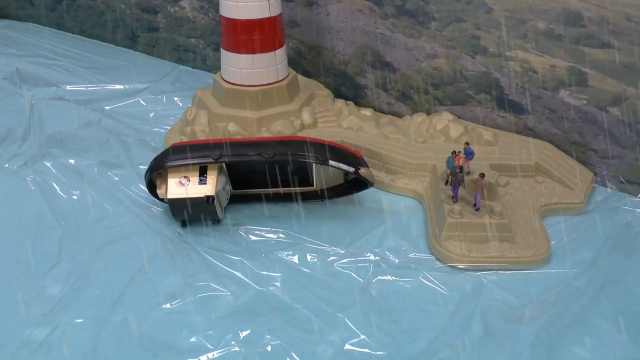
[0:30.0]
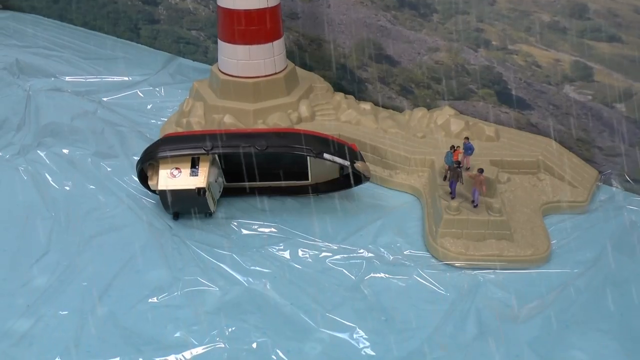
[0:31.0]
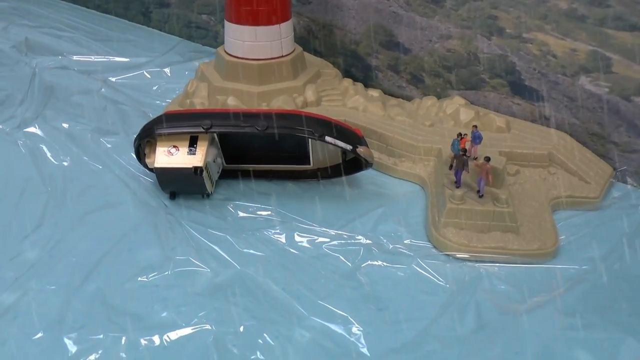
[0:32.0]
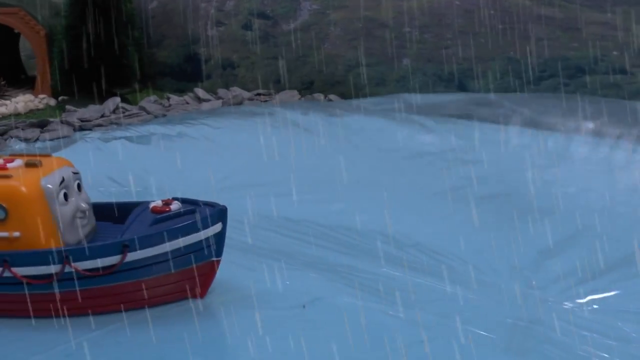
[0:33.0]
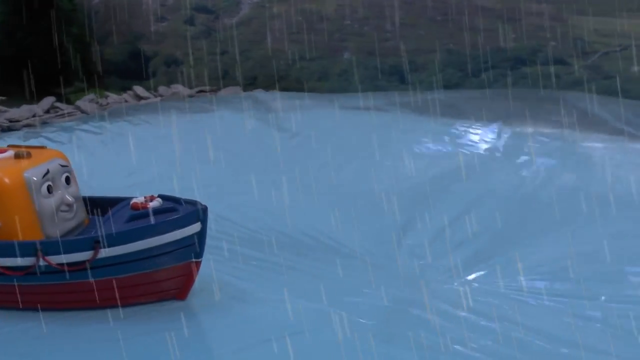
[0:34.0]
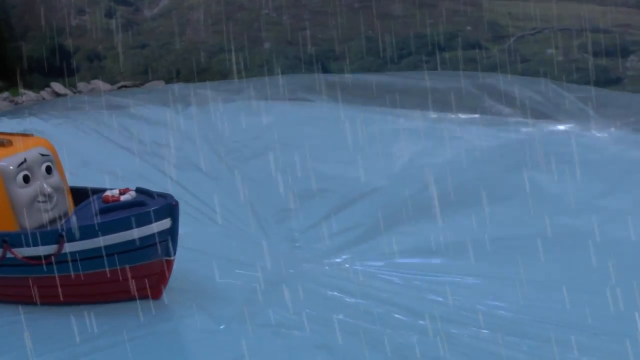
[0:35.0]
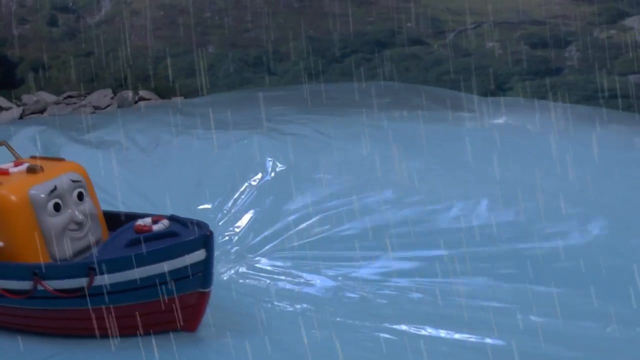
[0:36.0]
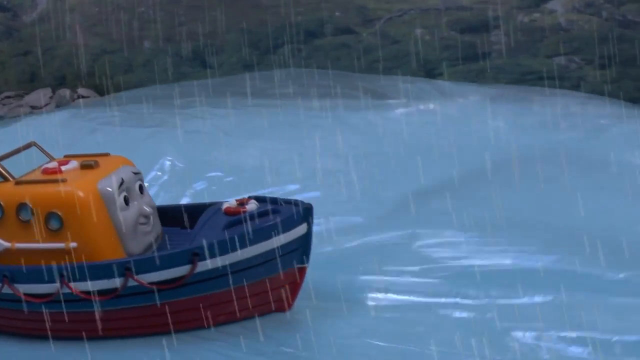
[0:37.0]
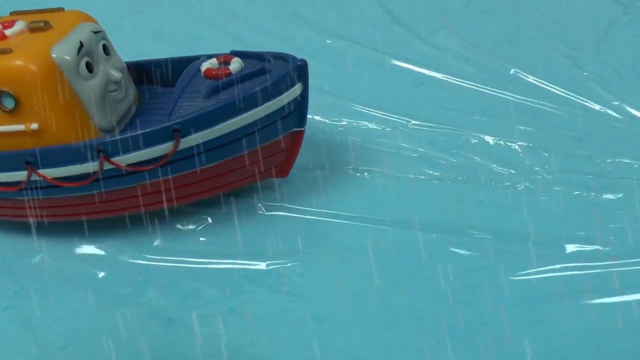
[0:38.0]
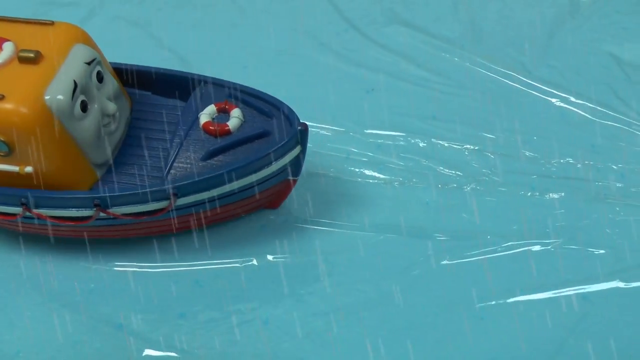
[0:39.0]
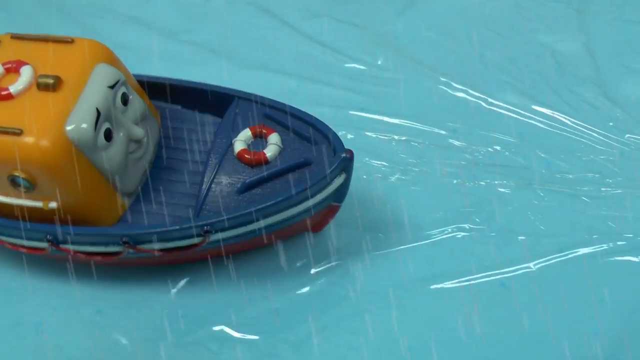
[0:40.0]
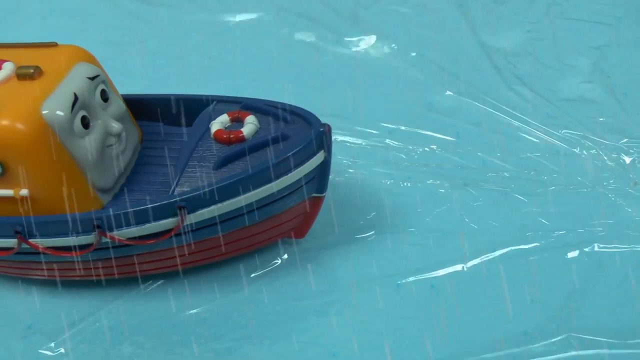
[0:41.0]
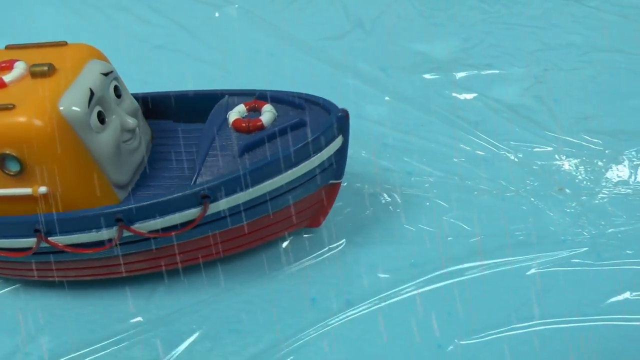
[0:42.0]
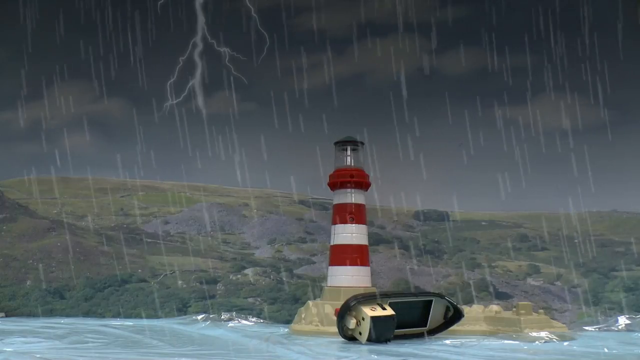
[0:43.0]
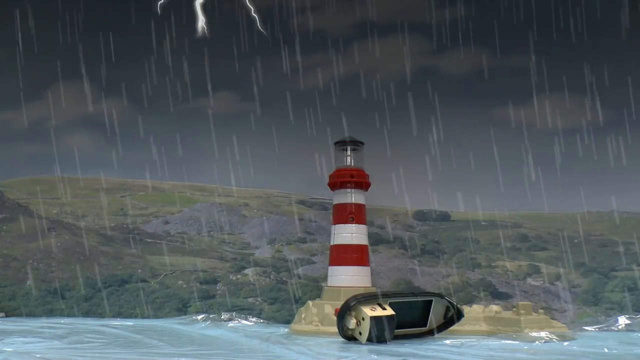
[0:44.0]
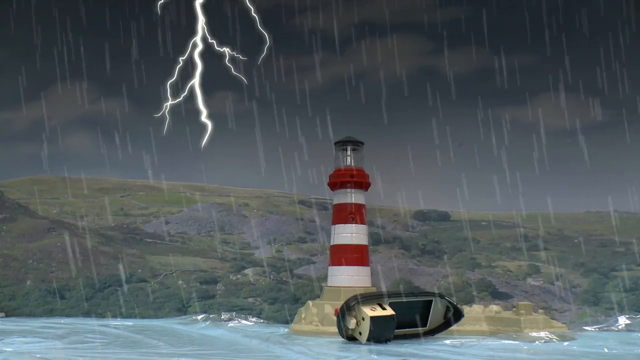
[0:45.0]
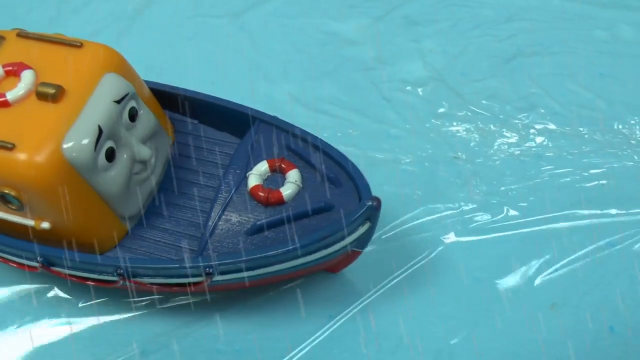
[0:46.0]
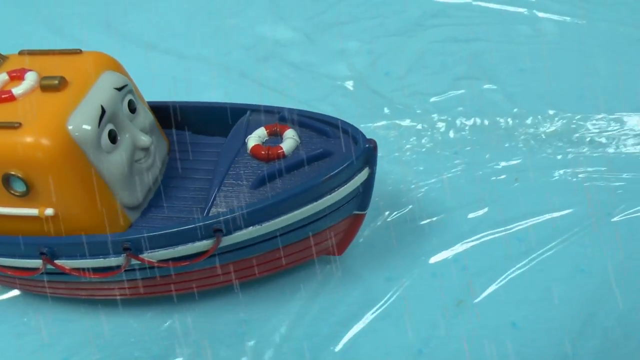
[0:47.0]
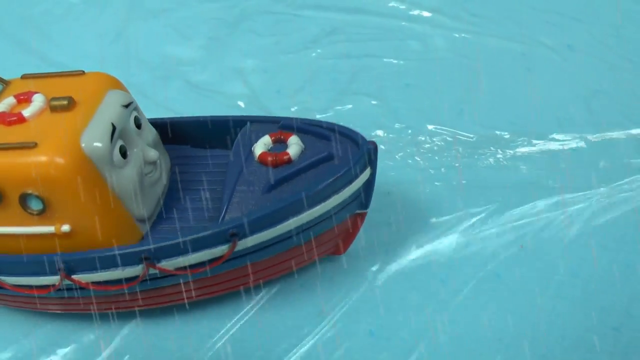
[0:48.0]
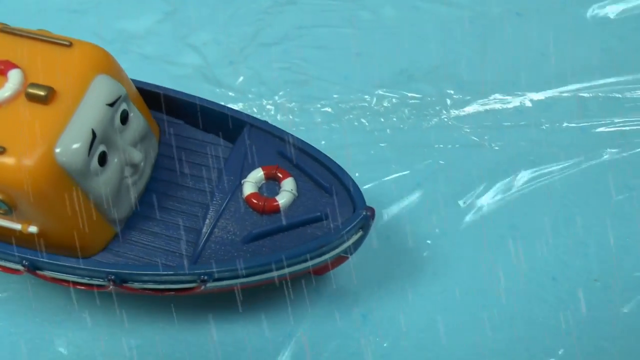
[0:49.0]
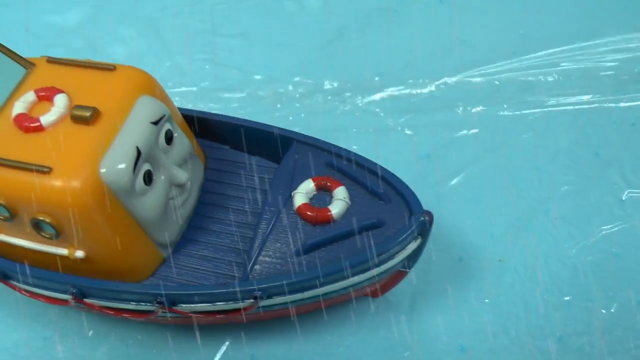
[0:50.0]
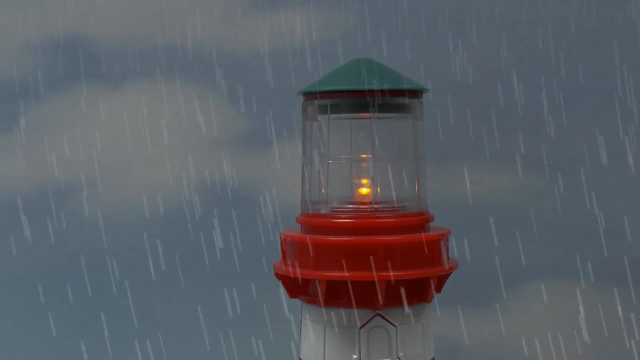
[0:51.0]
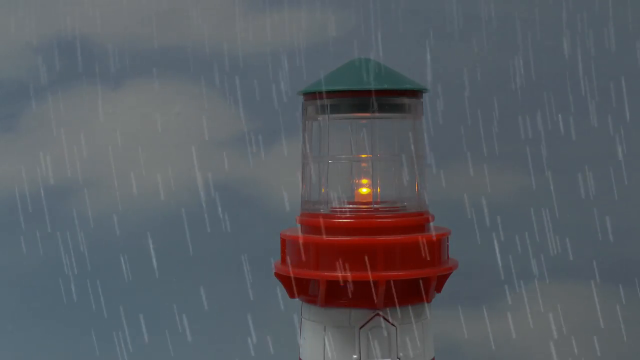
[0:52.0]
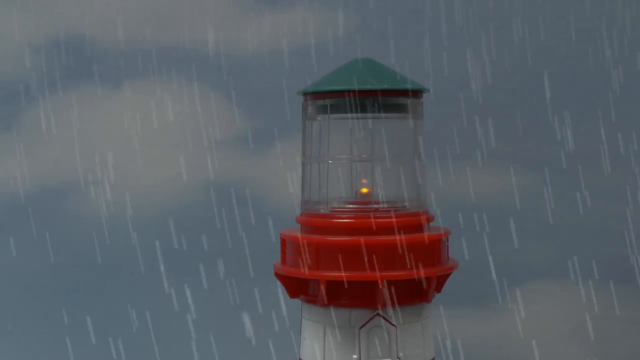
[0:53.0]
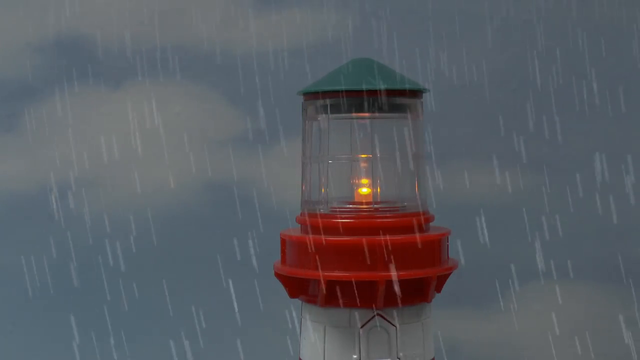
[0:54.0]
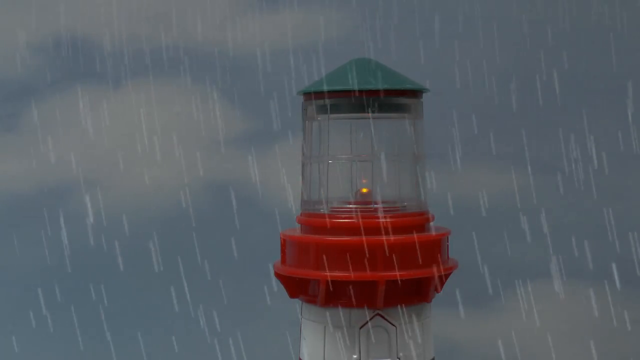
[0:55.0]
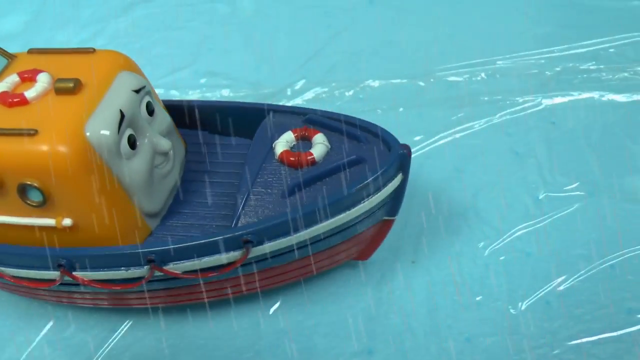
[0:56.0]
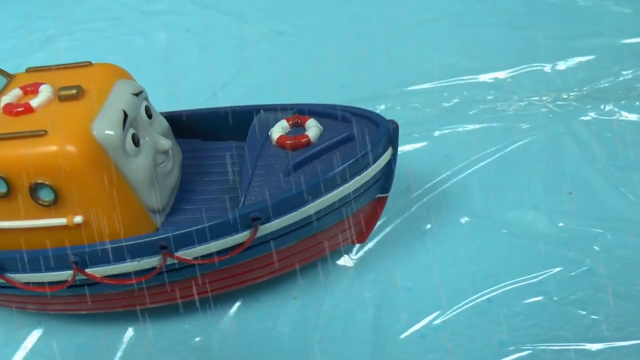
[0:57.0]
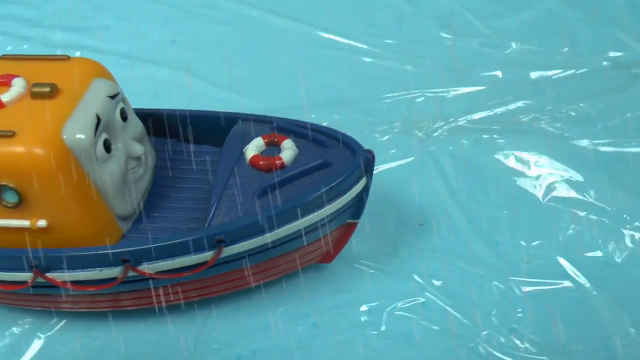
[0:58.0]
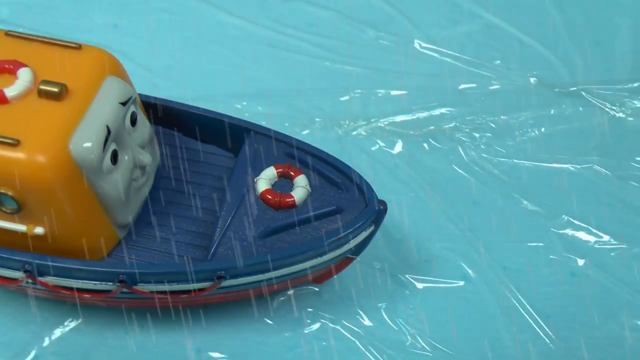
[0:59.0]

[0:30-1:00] The shot stays on the capsized boat: its side is black, the inside has a black border, it is gray at the bottom with a big black square, and the cabin is flipped over pointing downward, white with a green top. In front of it to the right, four little plastic people stand on a plastic piece meant to be rocks. The camera slowly points down to the right, showing the boat with Thomas the train engine in it, blue on top and red on the bottom, crossing the waving plastic water as rain comes down. The engine in it is red with a gray face. The boat moves from left to right, tilting down a little as if in heavy waves. It cuts back to the capsized boat as lightning strikes in the sky to the upper left two or three times in heavy rain, then back to the boat going through the water, tilting downward so it looks rocky and rough. The top part of the lighthouse appears: red at the bottom, glass with a light shining in it, and a pointed green top; the light flickers on and off like an alert. It cuts back to the boat with the train in it moving through the water from left to right.